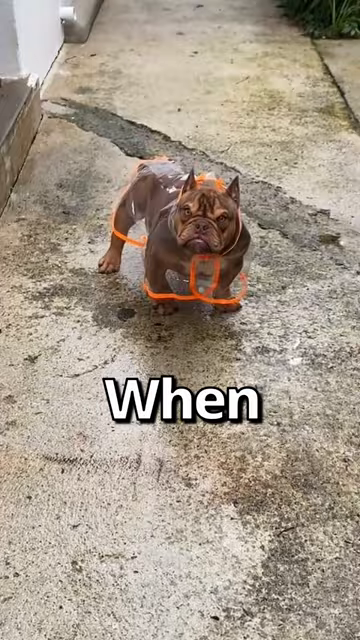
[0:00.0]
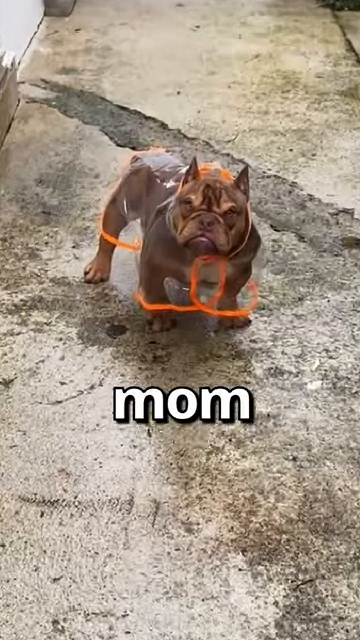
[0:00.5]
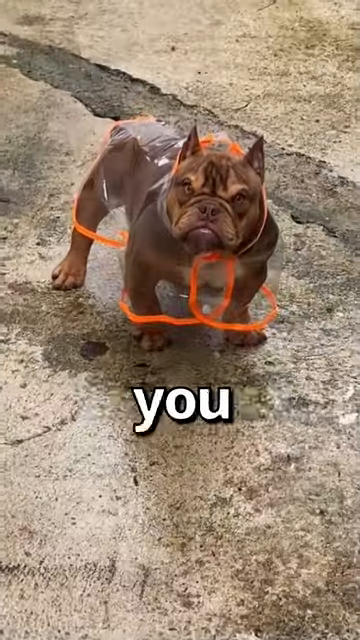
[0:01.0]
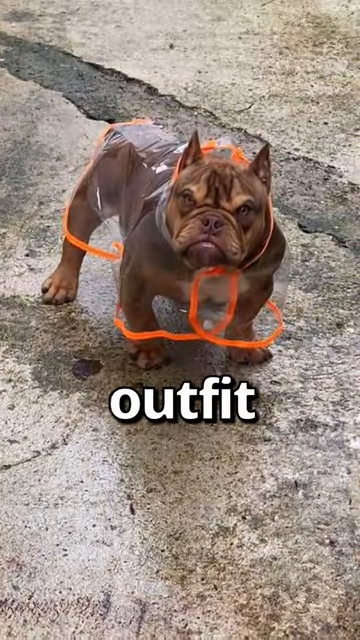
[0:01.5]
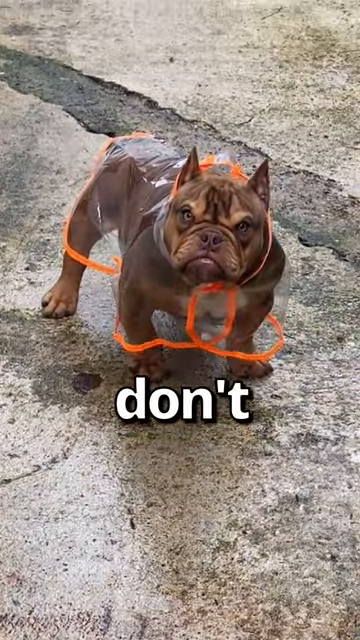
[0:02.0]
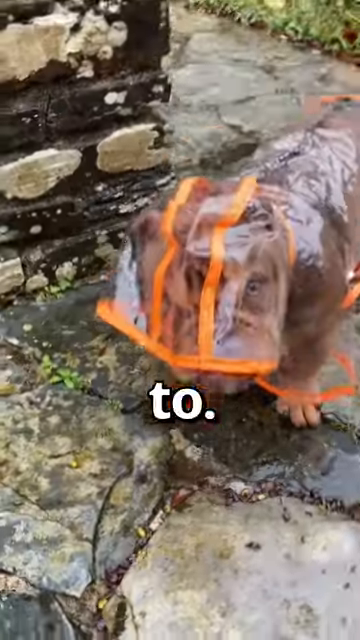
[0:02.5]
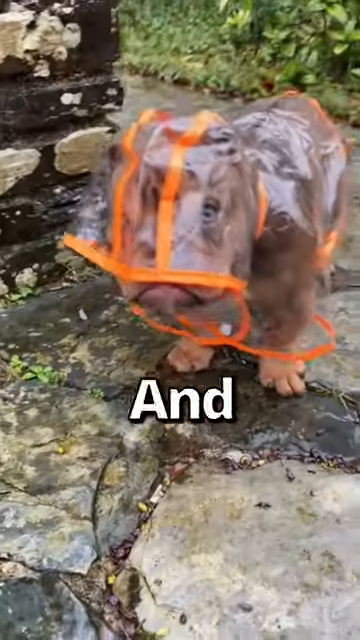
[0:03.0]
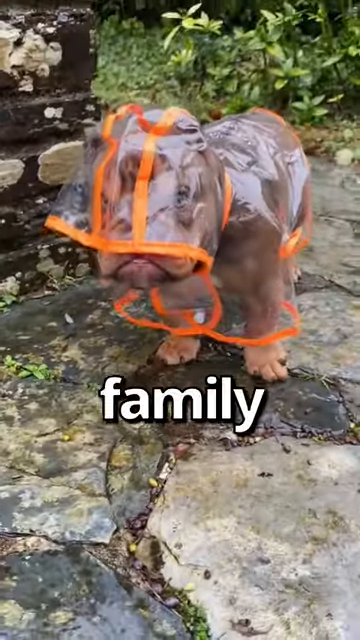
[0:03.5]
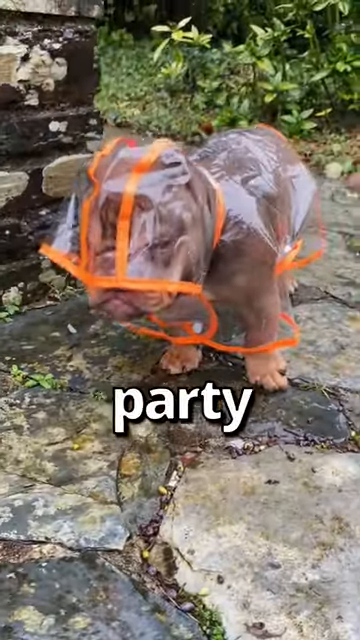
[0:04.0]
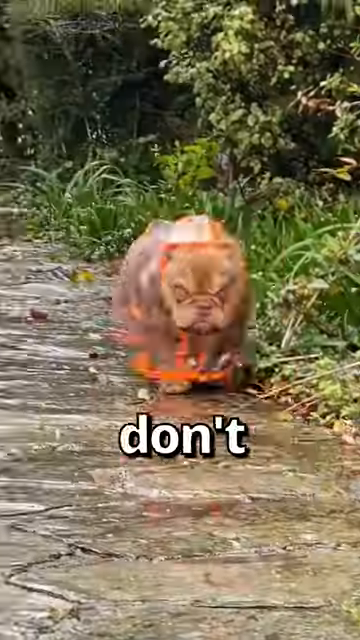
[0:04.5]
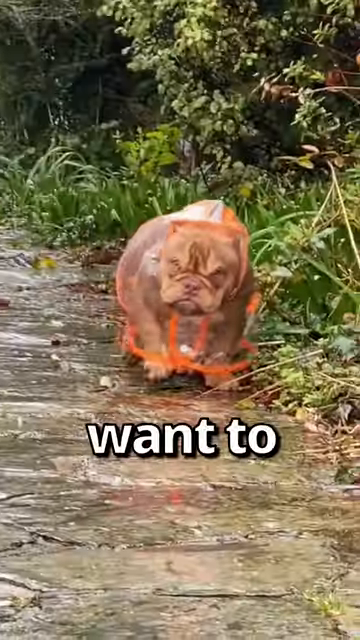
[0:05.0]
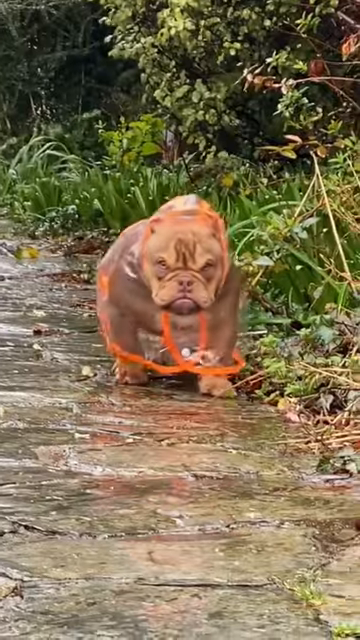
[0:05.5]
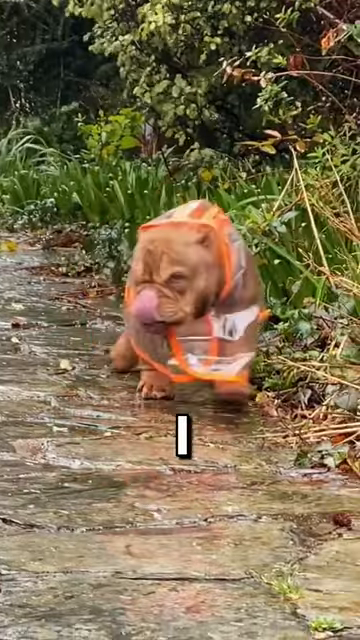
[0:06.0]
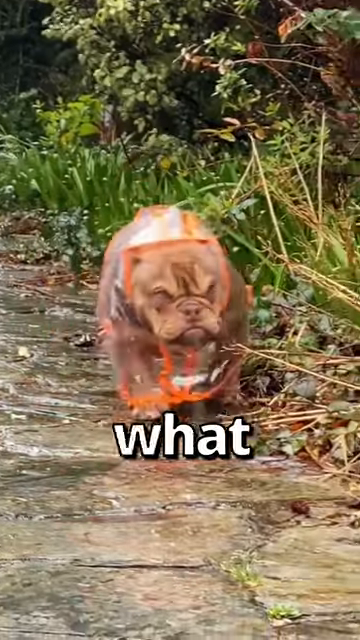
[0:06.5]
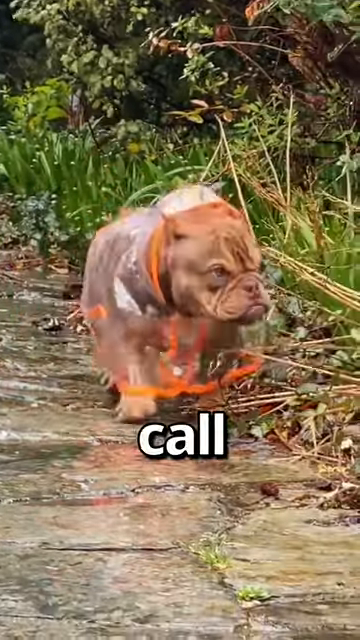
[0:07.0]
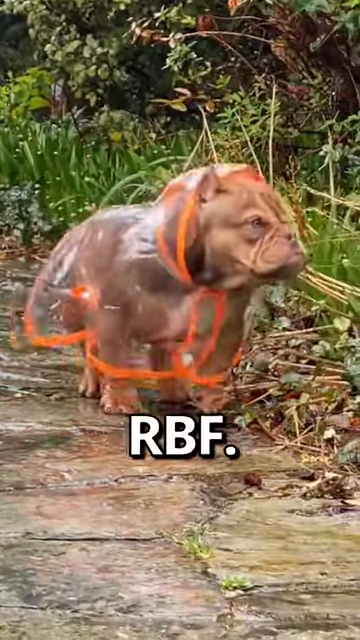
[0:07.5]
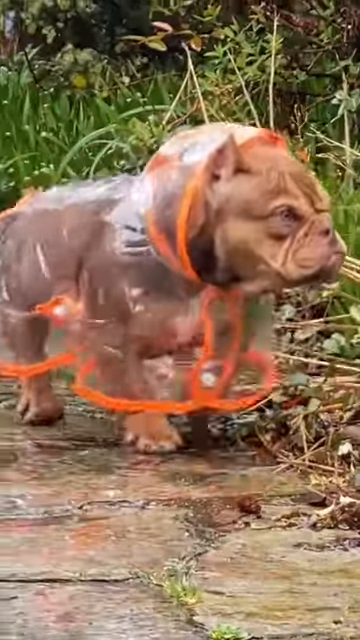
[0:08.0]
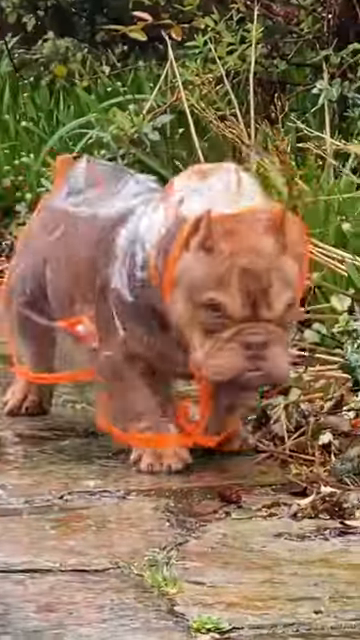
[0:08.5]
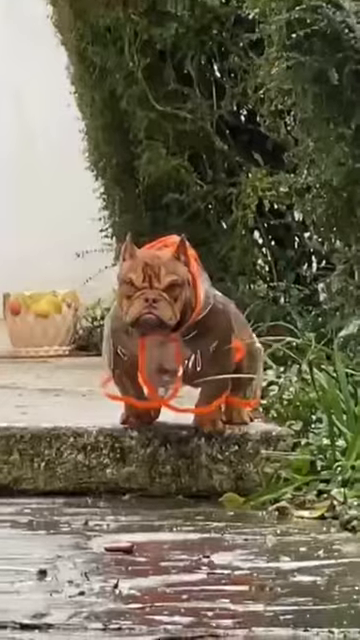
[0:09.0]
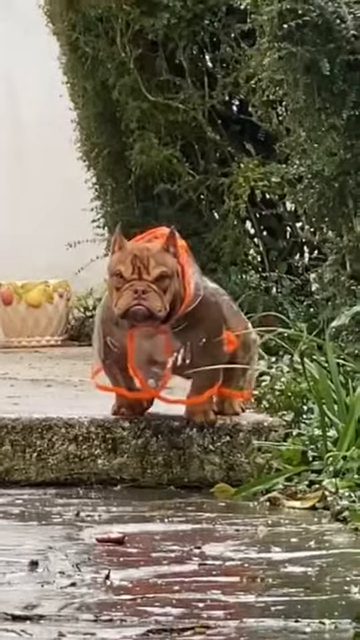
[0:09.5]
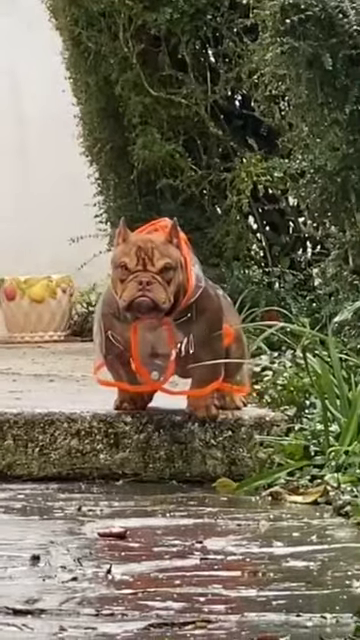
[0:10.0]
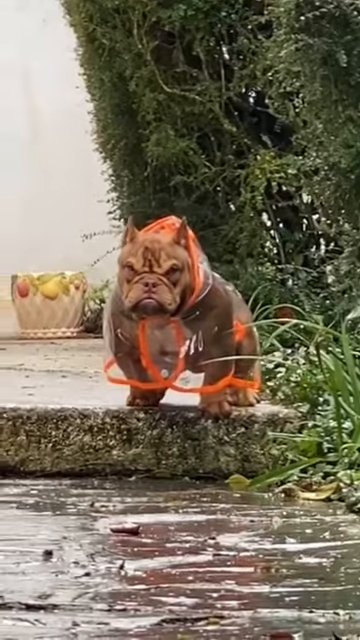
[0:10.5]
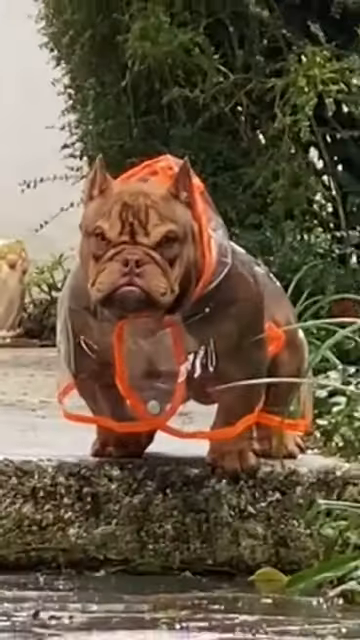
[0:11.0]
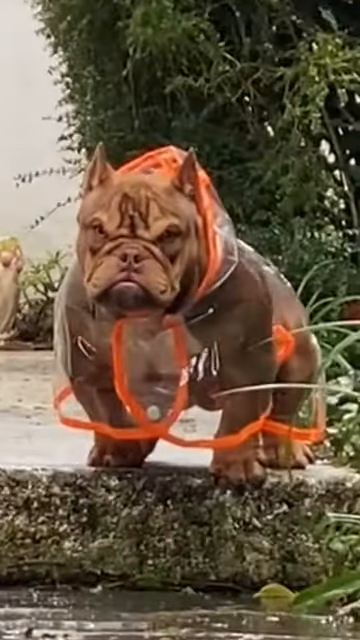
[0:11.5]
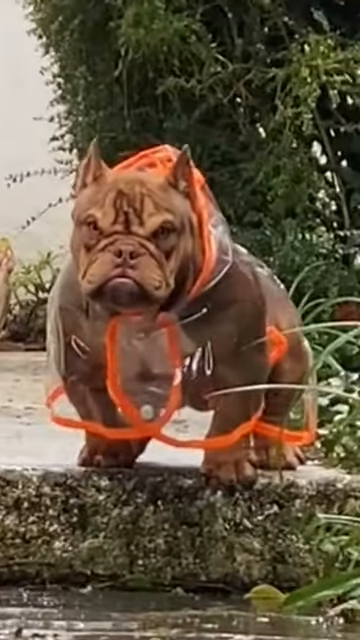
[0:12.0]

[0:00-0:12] A dog wears a poncho. It seems to be a pitbull or pitbull terrier type of breed. The dog has a resting annoyed face that makes it look unhappy with the situation, though this is just its natural look. It wears the poncho outside while walking along rocks, and various settings and camera shots show the dog looking content or discontent about having to wear it as it walks. The dog is brownish and not very big, probably a puppy in its first few months.